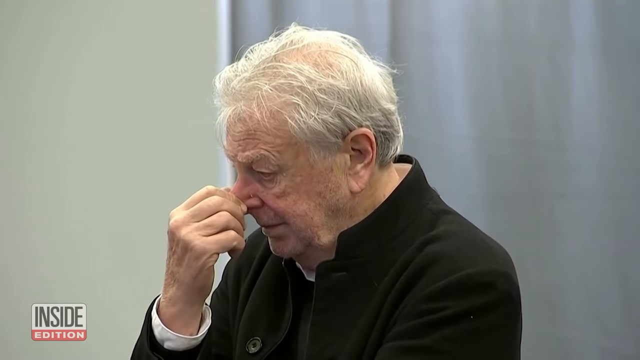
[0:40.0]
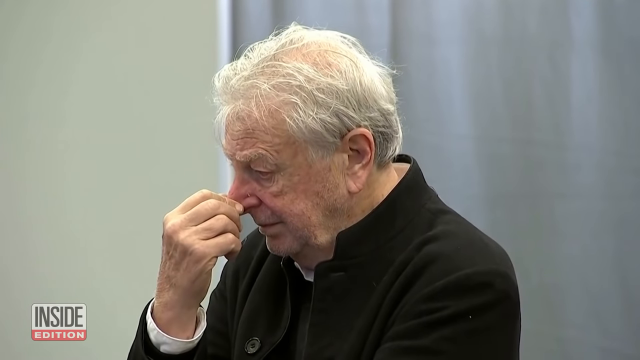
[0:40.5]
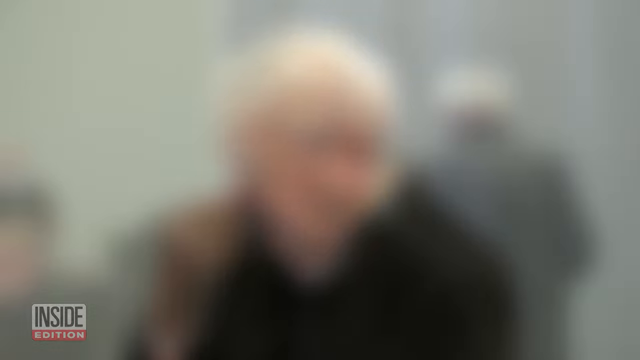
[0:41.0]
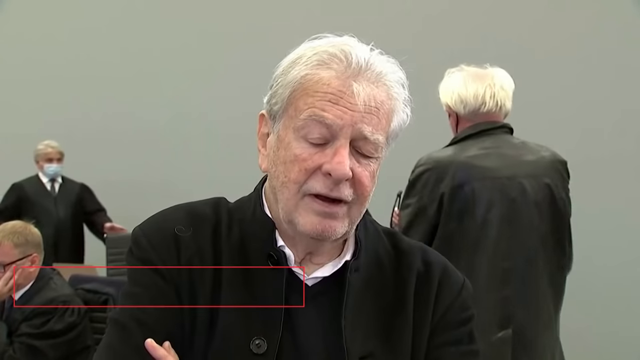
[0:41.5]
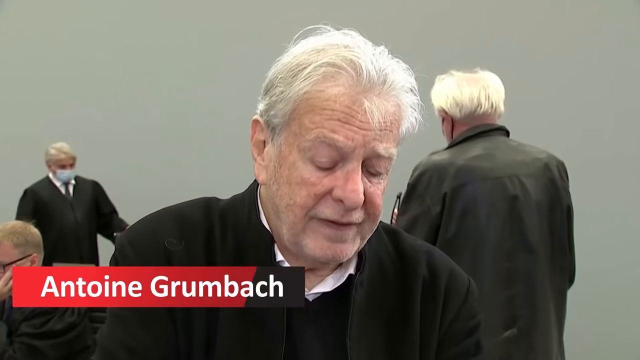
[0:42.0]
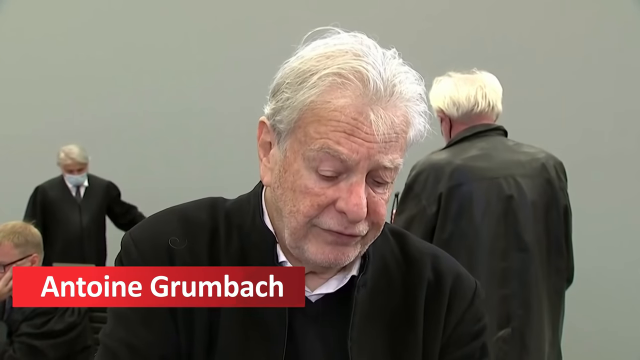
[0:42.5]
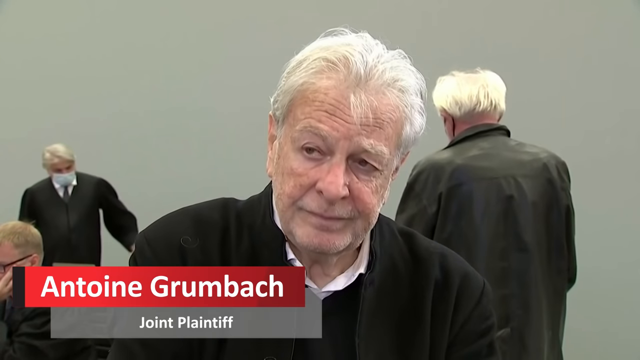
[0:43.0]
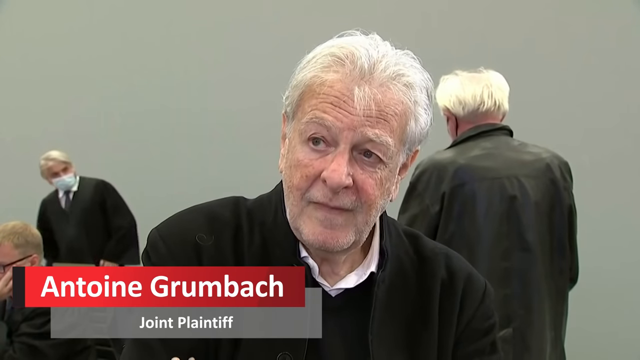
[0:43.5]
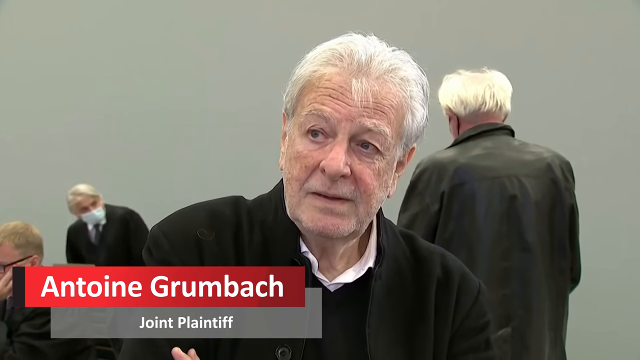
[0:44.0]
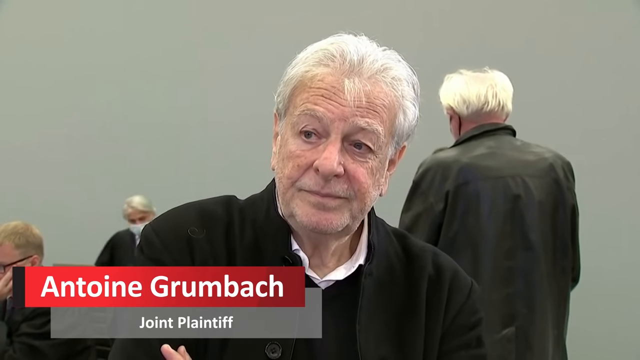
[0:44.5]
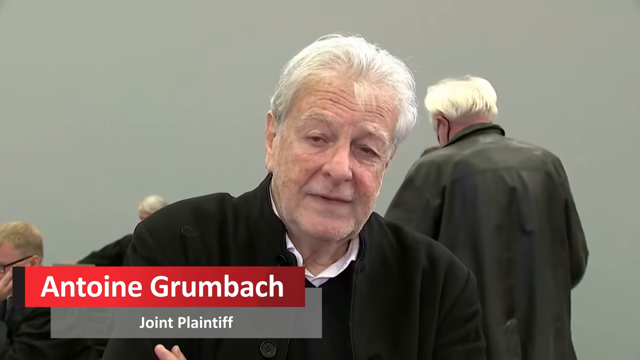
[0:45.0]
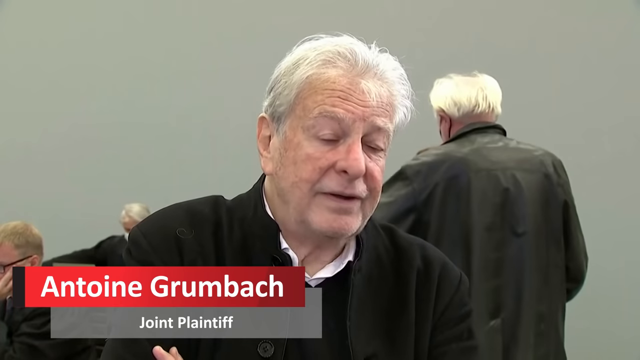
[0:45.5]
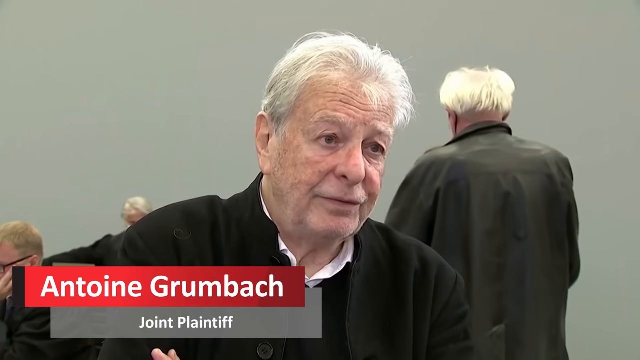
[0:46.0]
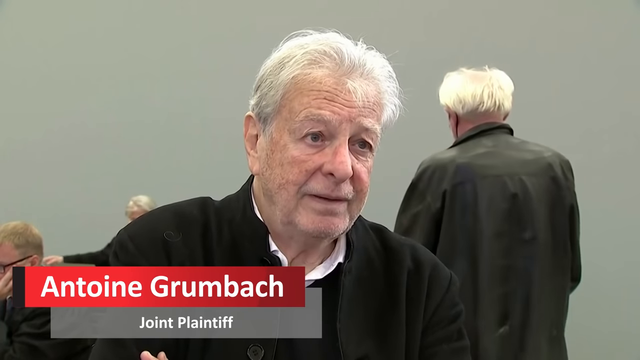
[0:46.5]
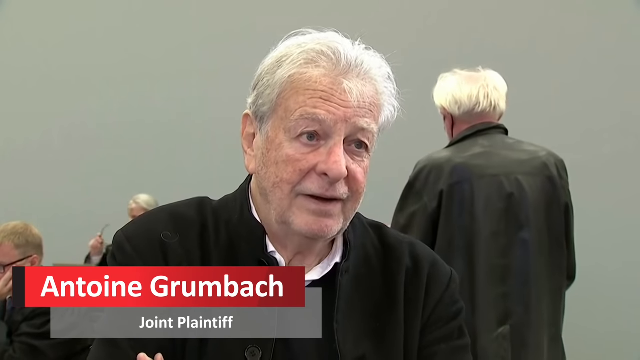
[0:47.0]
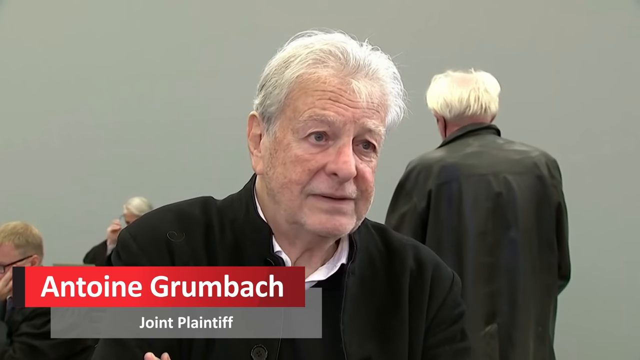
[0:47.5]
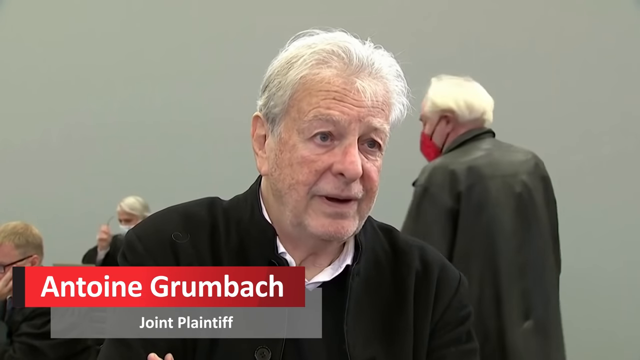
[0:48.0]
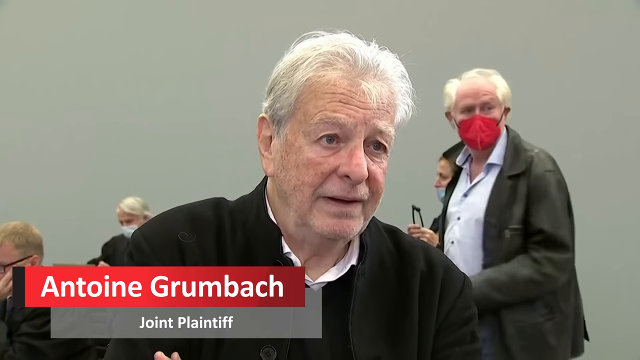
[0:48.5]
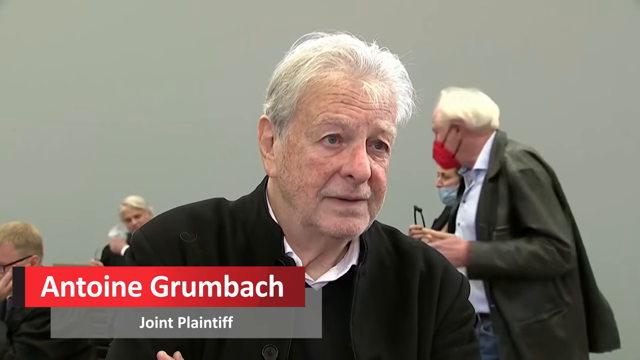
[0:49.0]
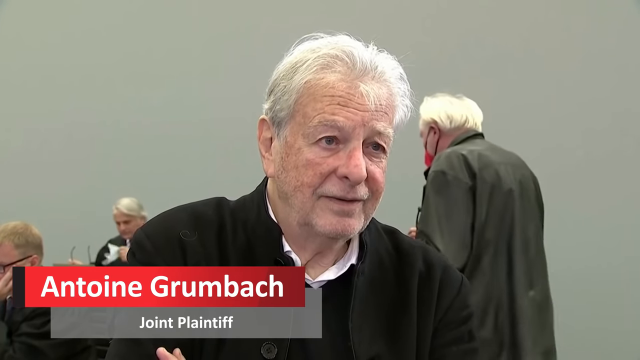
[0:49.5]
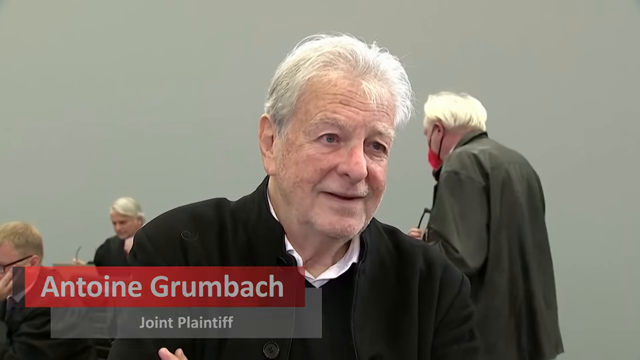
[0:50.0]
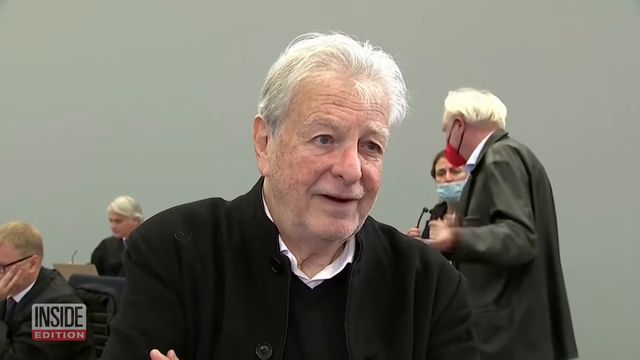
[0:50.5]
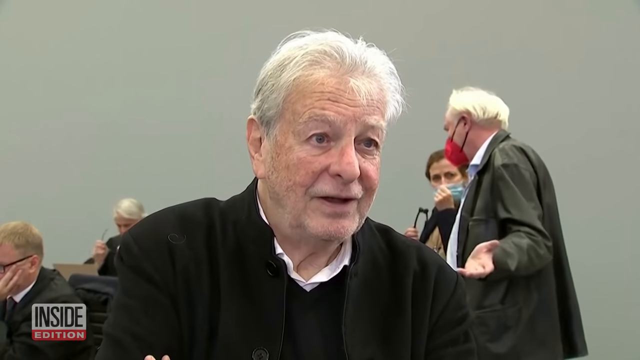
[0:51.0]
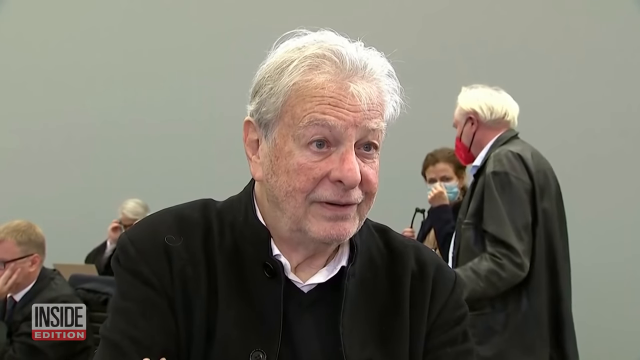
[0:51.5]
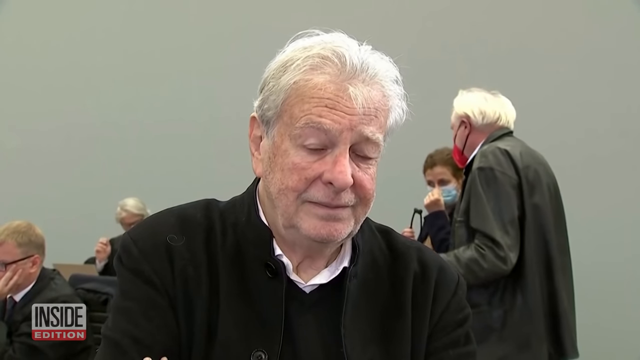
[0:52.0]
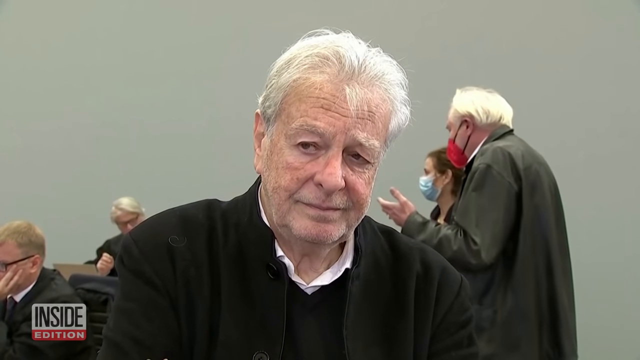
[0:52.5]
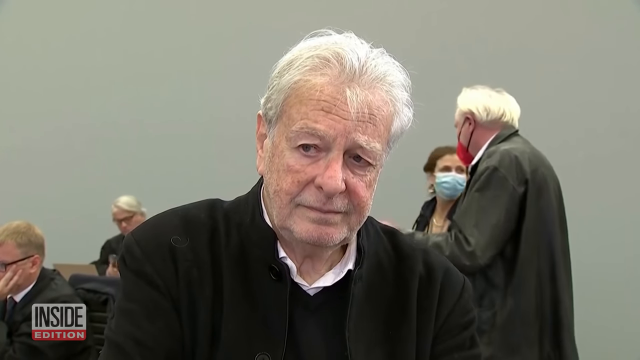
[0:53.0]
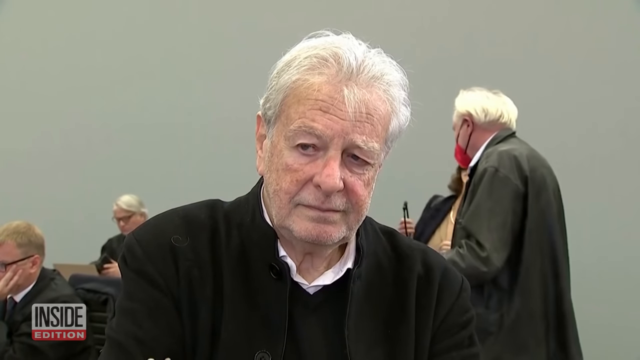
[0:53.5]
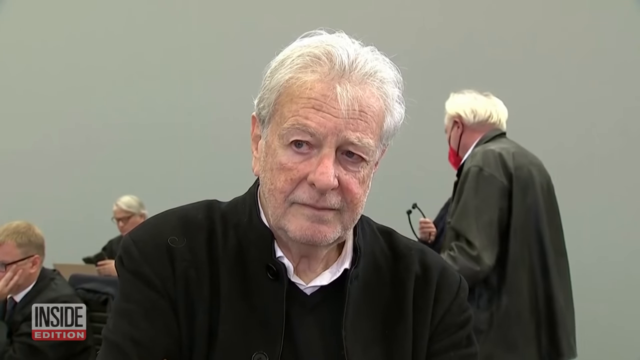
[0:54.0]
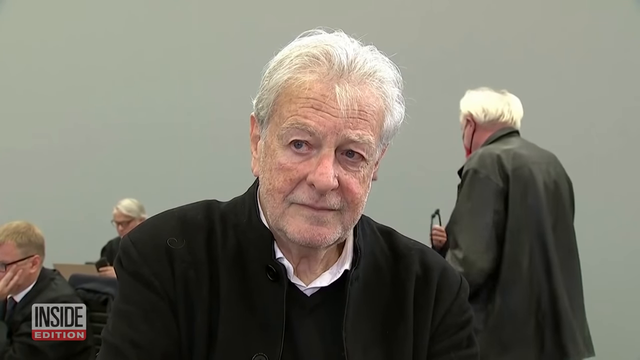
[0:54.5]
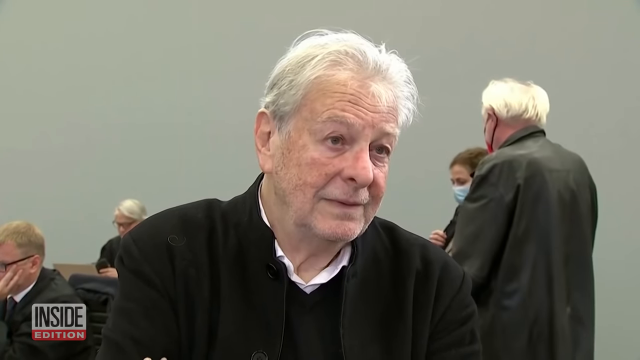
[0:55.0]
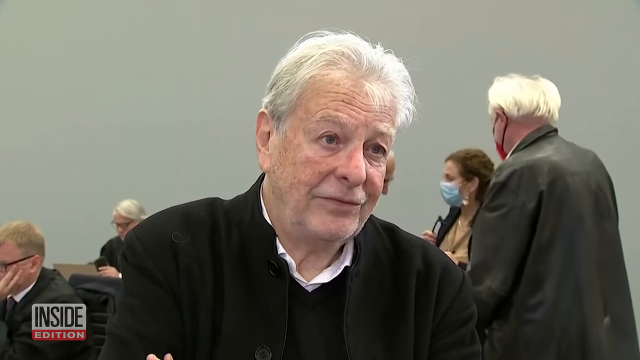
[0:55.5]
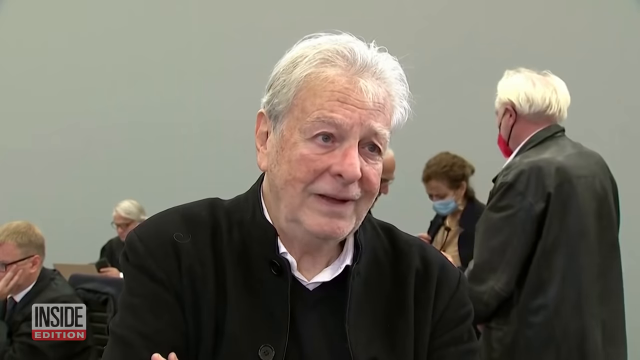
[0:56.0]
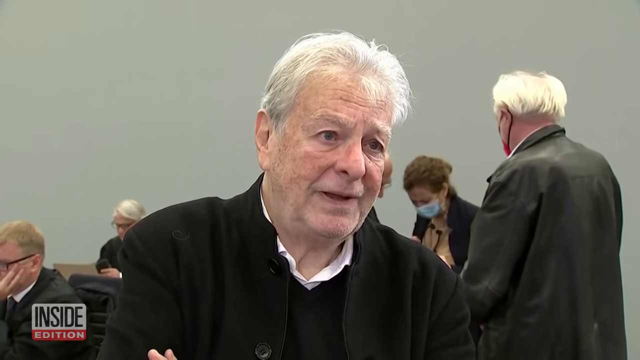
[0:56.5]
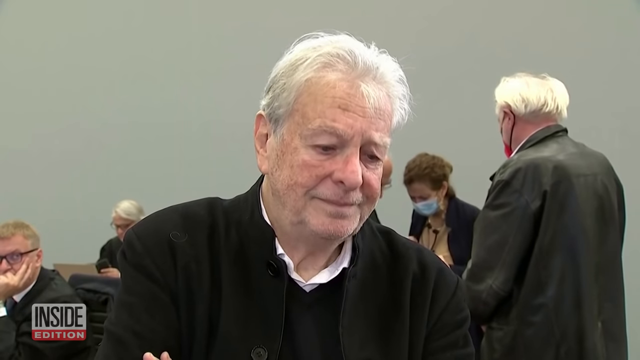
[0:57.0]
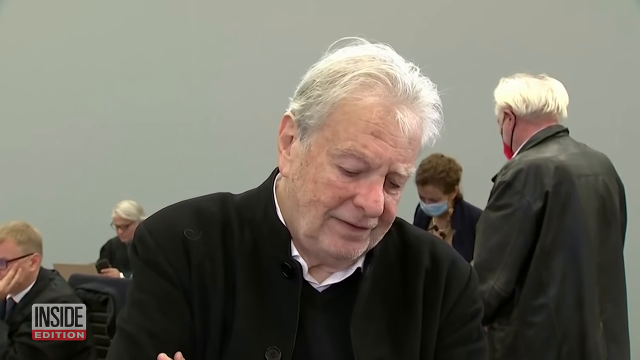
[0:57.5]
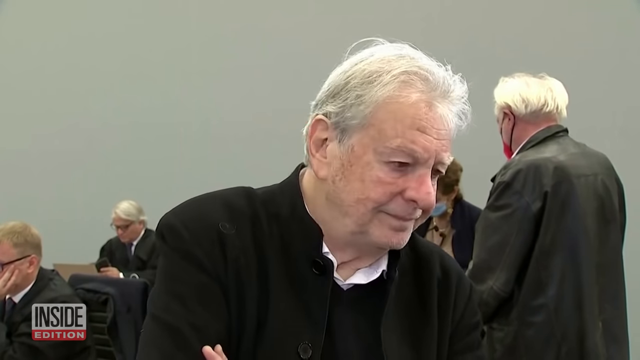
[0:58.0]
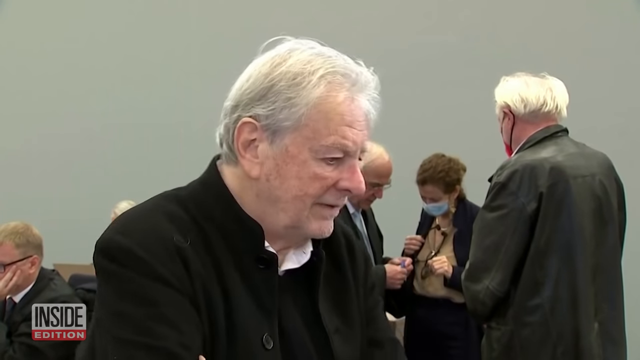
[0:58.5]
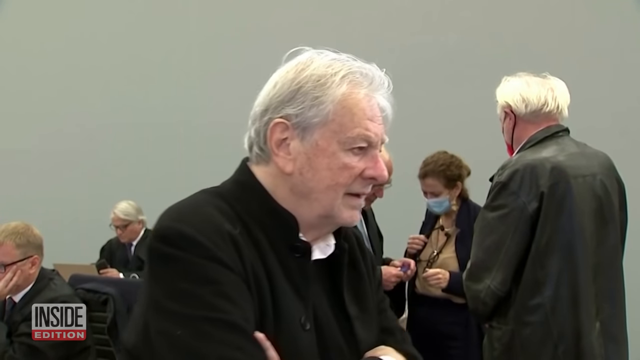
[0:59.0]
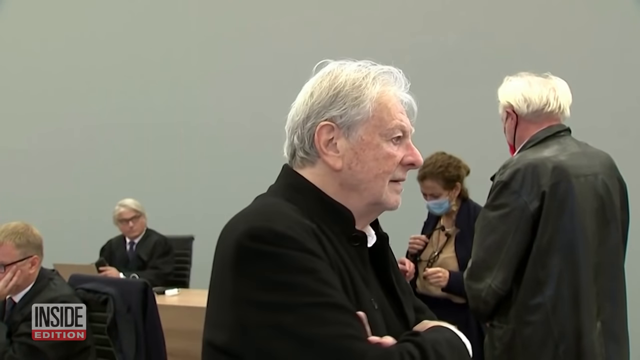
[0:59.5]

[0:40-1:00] An elderly man with white hair, clean-shaven, wearing a black jacket and a white button-up shirt, is speaking. His name appears in a text box on the lower left-hand side, with a red background and white text reading "Antone Grumbach", with the subtitle "Joint Plaintiff" underneath. Behind him, four people are speaking or sitting and reading documents; some wear masks and others do not. There is one woman and four men in the background. As he speaks, he appears sad or distressed, shaking his head in mannerisms that indicate negative emotion. The room has white walls. The people in the room are dressed fairly casually; one man behind him is wearing jeans. Many of the people appear to be older, with white hair and features indicating an older age.